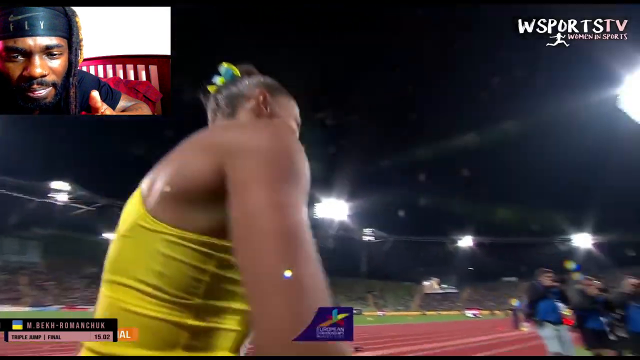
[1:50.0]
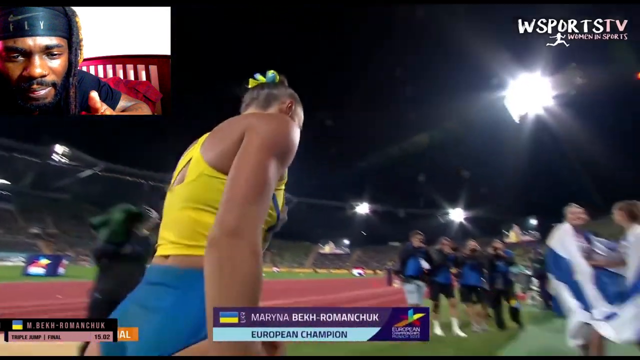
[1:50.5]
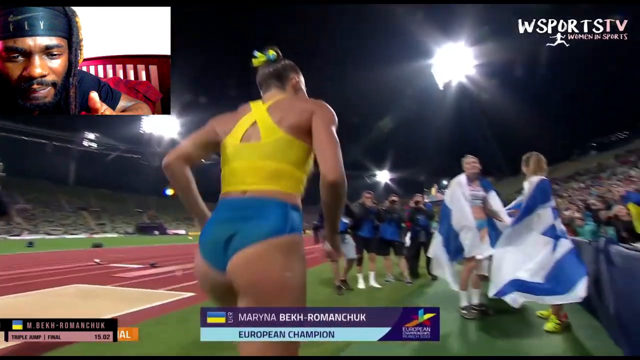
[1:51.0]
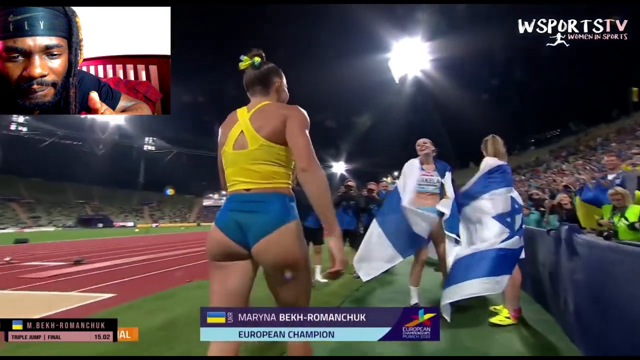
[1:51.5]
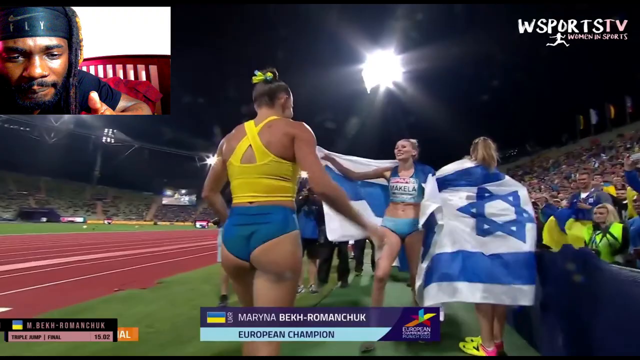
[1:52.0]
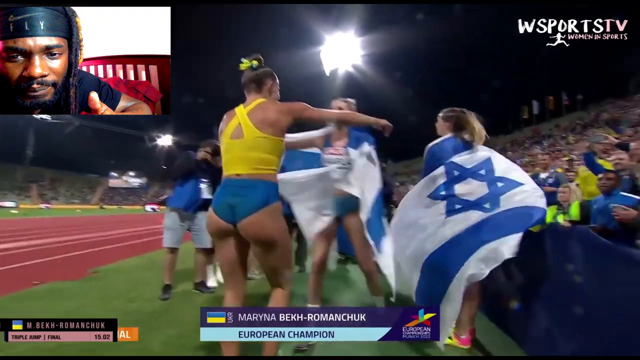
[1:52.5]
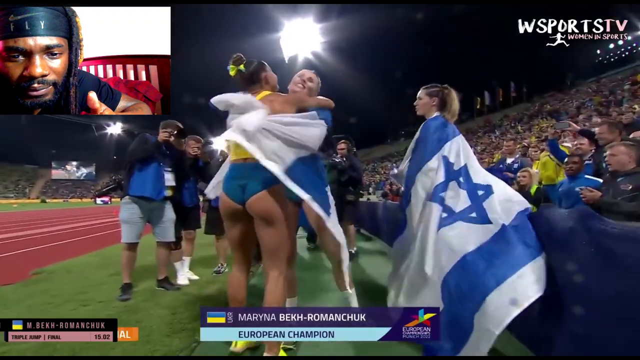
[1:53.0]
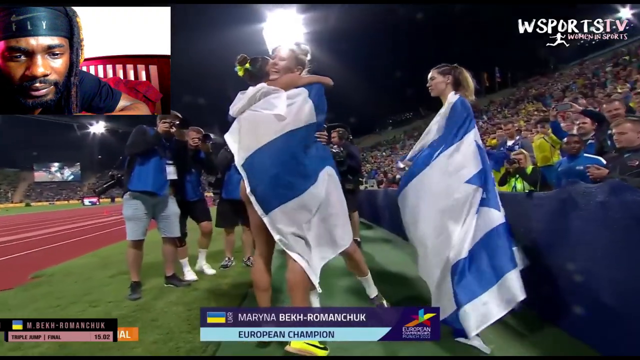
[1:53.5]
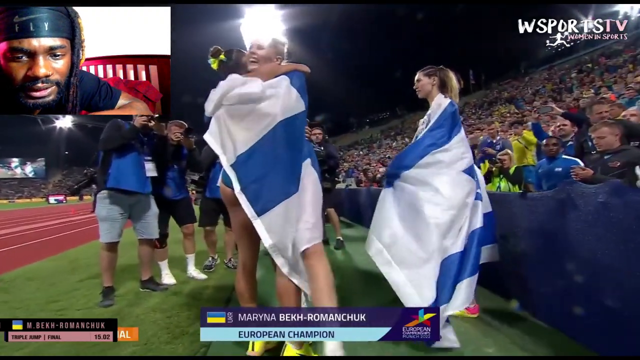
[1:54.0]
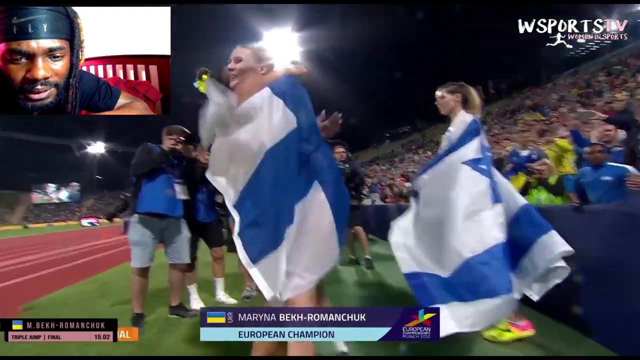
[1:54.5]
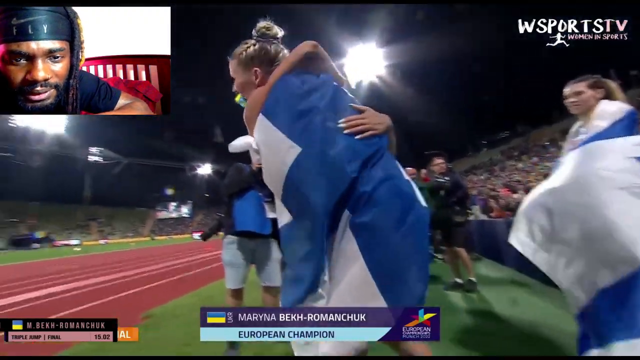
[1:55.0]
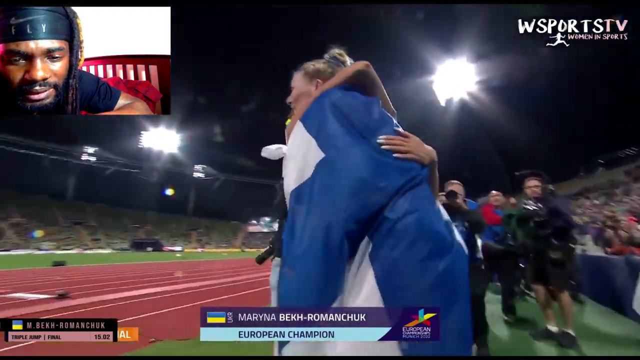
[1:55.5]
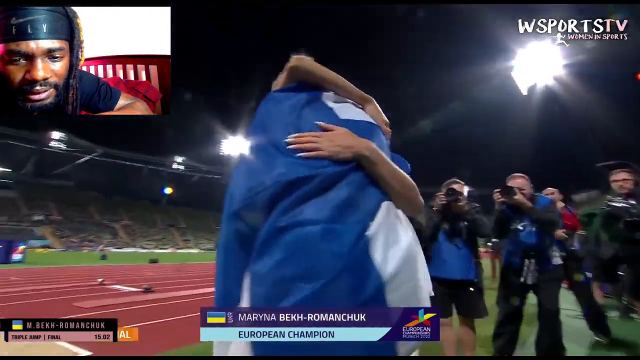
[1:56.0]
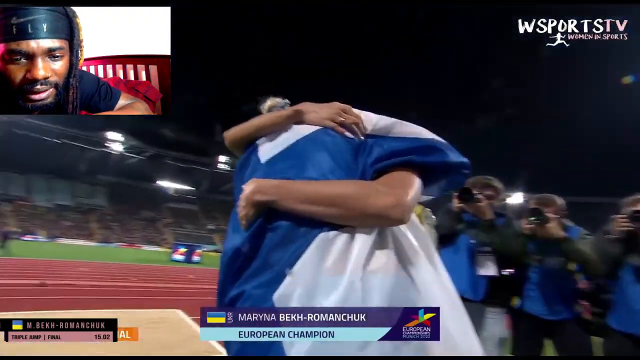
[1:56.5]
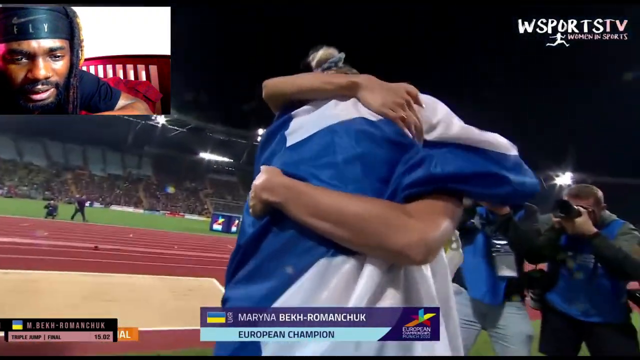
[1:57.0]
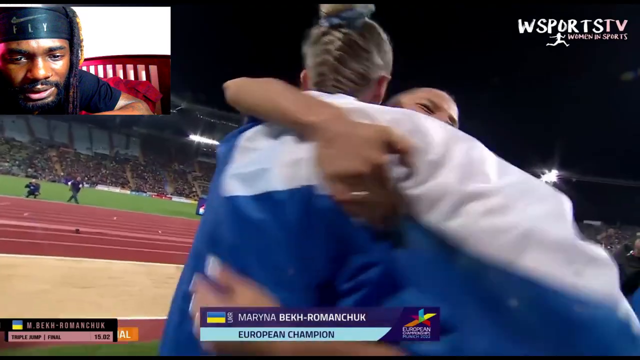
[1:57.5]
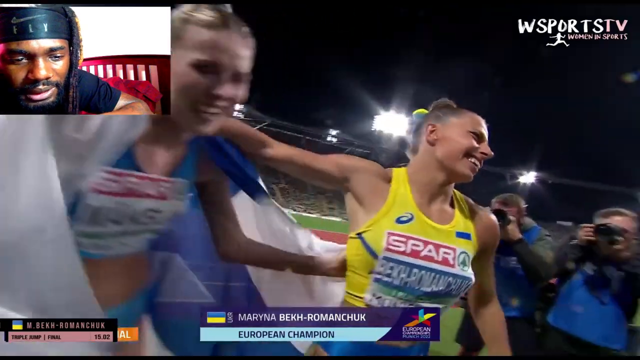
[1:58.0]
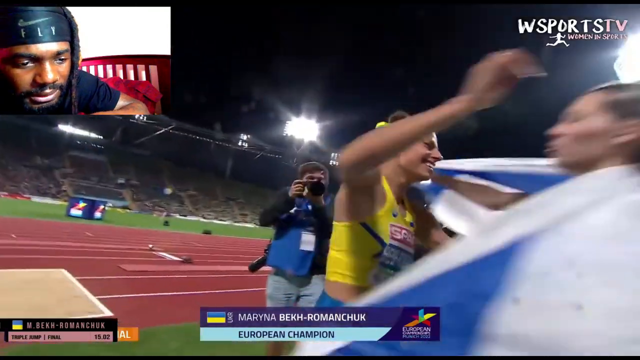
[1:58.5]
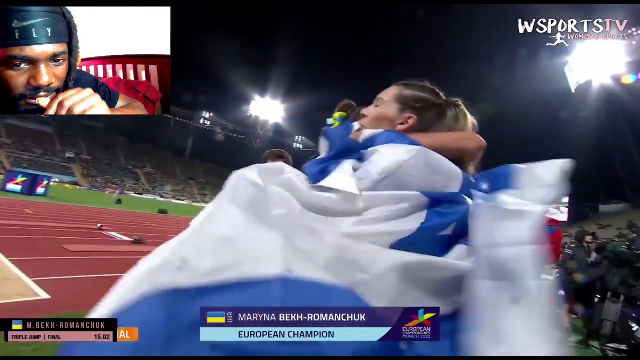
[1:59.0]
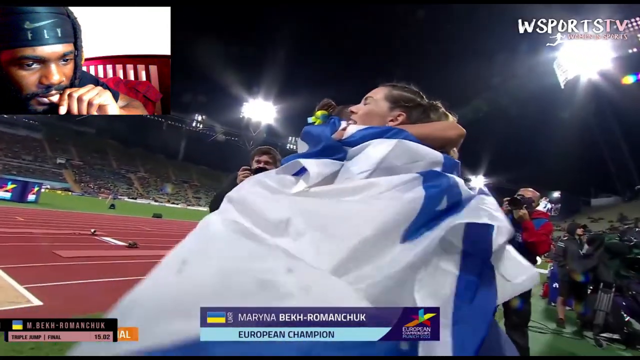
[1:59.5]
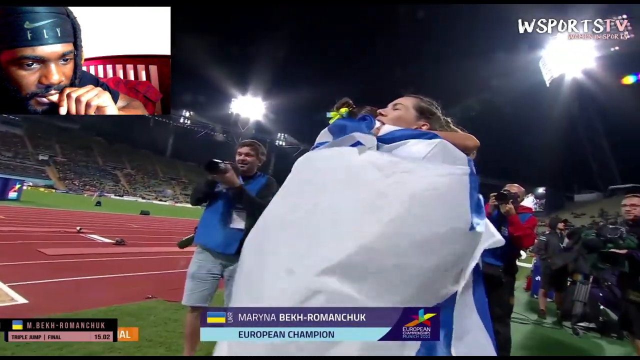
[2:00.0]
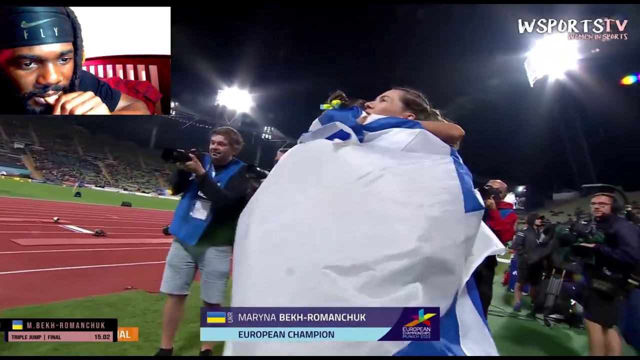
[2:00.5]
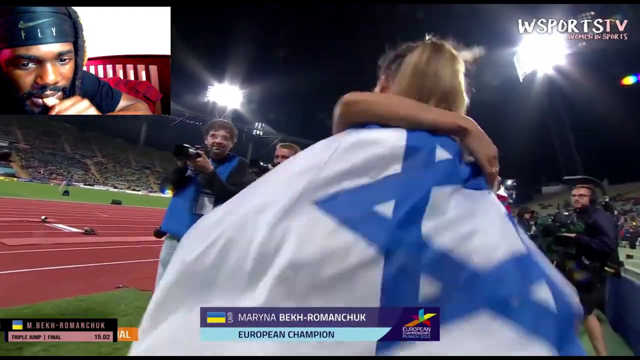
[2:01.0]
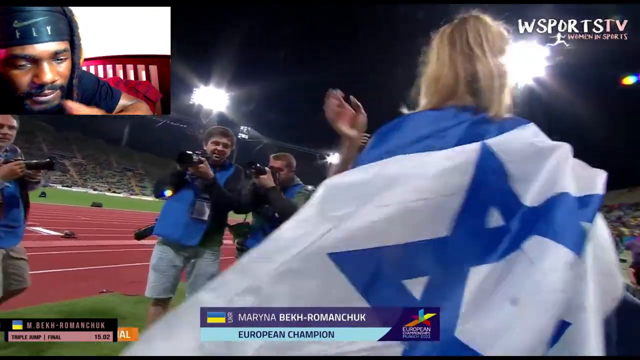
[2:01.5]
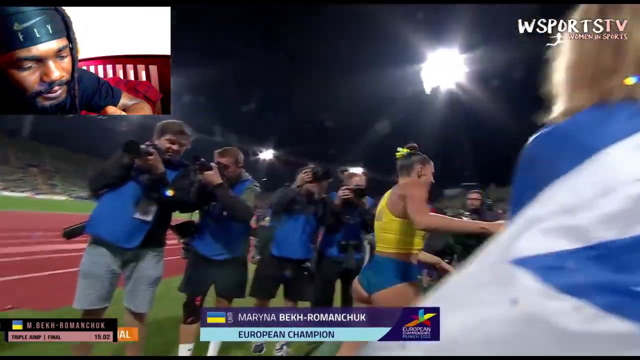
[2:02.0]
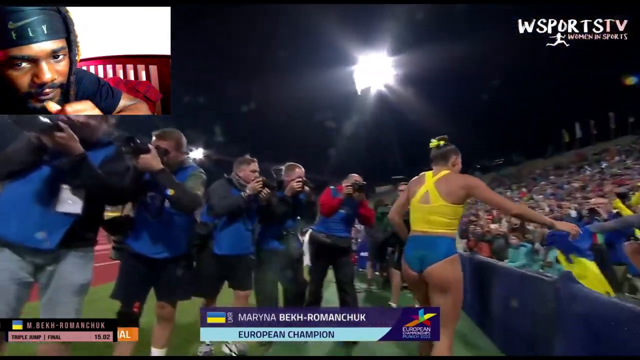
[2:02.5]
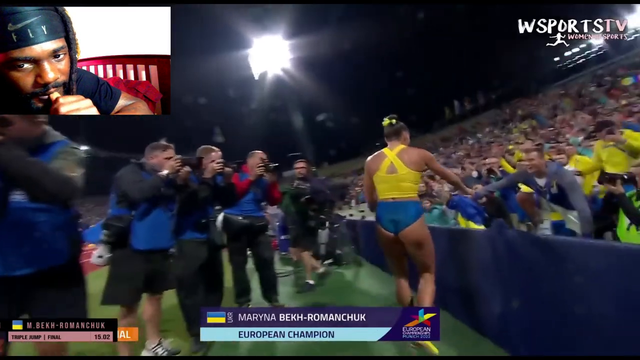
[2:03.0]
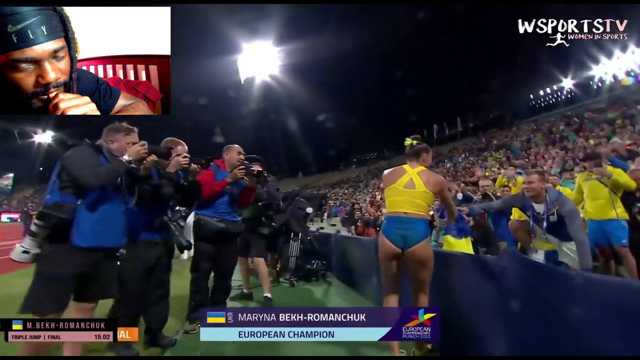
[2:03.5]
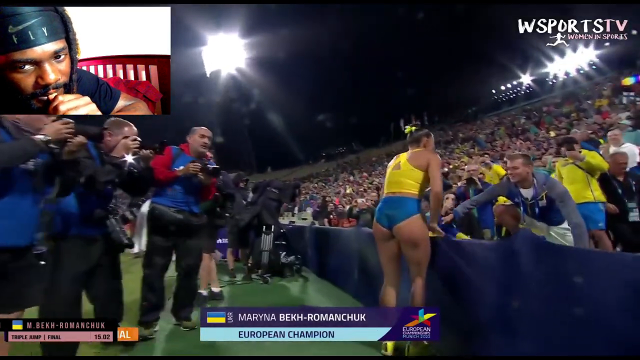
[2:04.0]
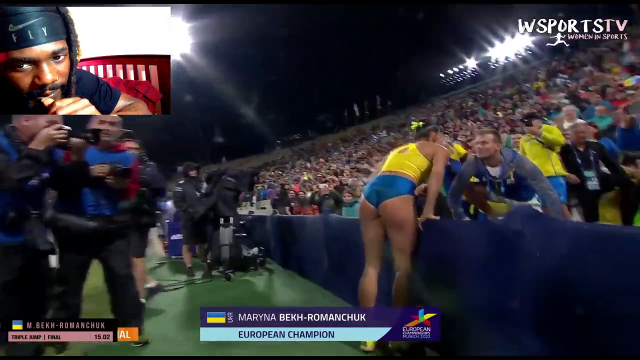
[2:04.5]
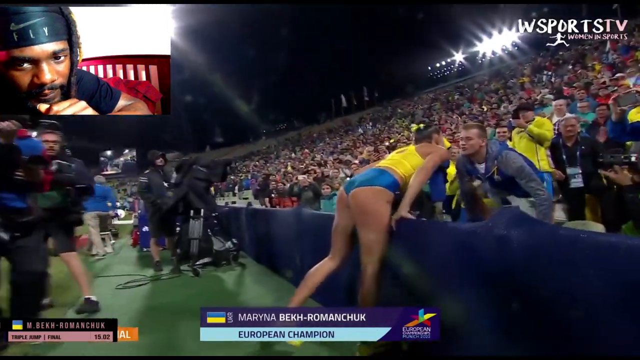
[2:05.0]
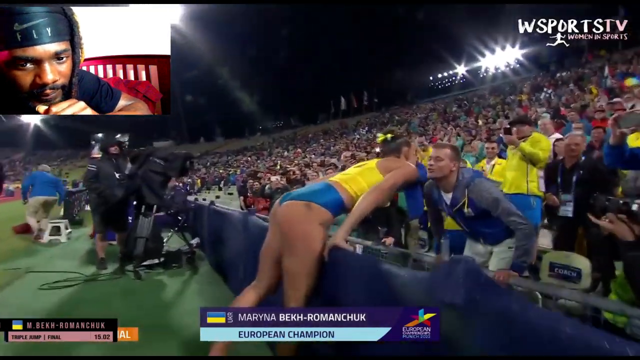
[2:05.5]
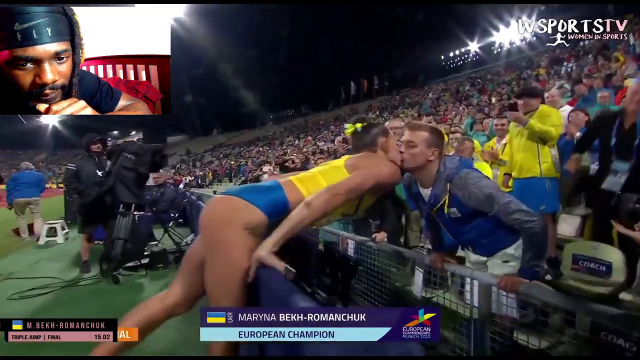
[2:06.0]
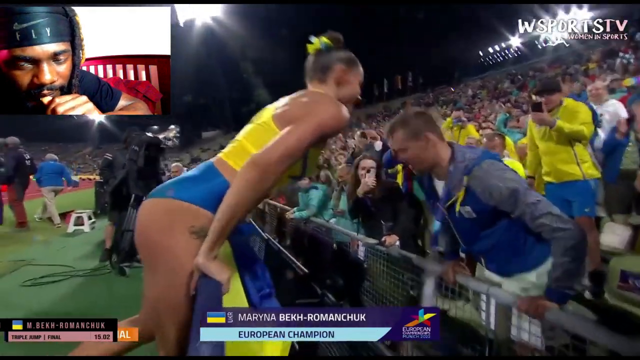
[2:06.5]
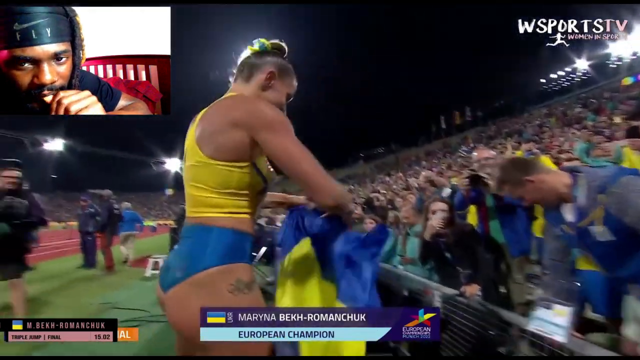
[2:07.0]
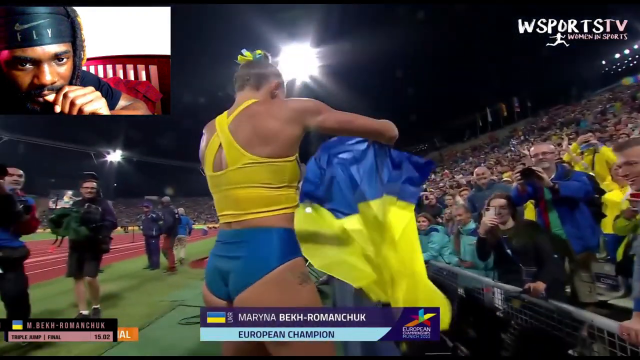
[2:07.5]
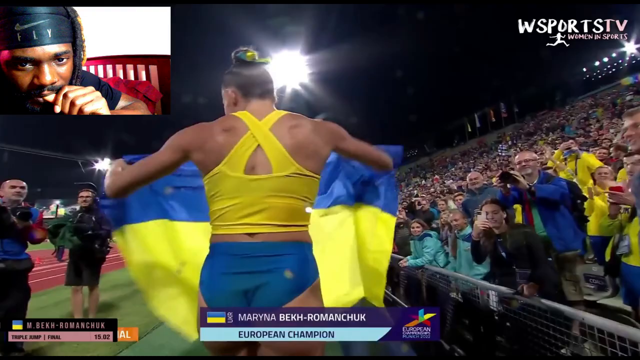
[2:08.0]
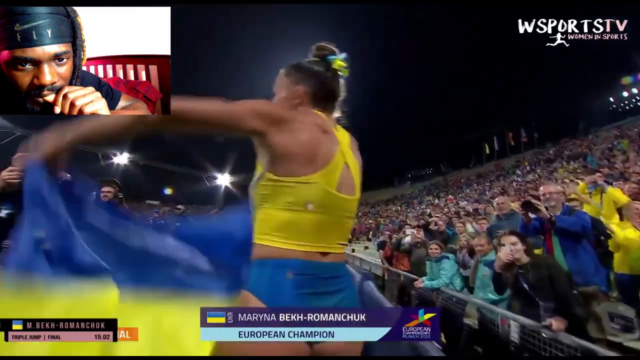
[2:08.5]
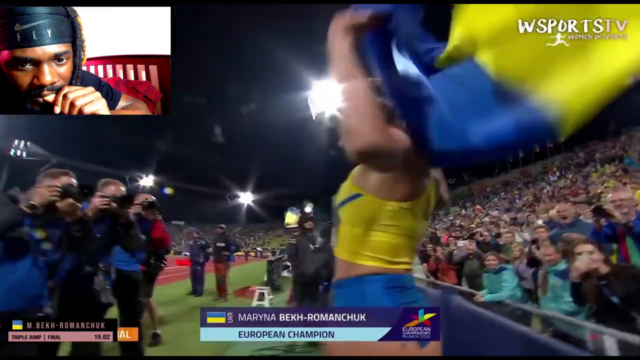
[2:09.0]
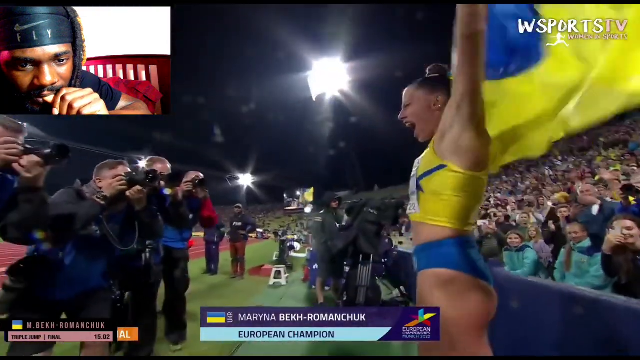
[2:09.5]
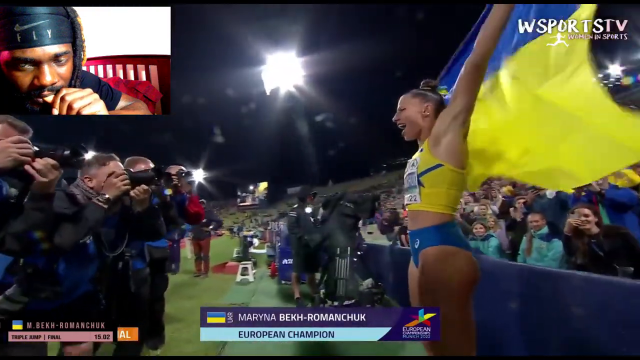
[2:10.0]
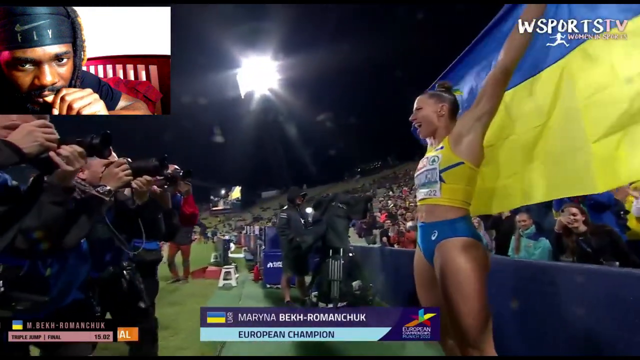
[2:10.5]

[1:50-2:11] She goes to a woman who appears to be her competitor and hugs her. Her name is shown at the bottom of the screen: "Marina Beck Romanchuk". She hugs everyone, and the other competitors she hugs have what appears to be an Israeli flag. She then seems to kiss a man, possibly her boyfriend or husband, who wears a grey vest or sweater. Afterward she raises a blue and yellow flag, possibly Ukrainian, and waves it around, and the text "European champion" appears at the bottom of the screen. She is very happy and cheers herself on. The event takes place at night; the sky is completely black, and many white lights shine down.